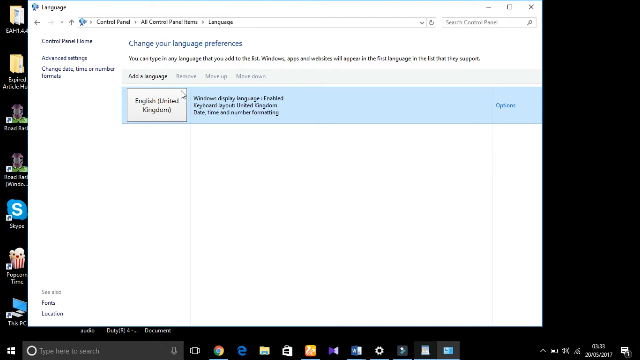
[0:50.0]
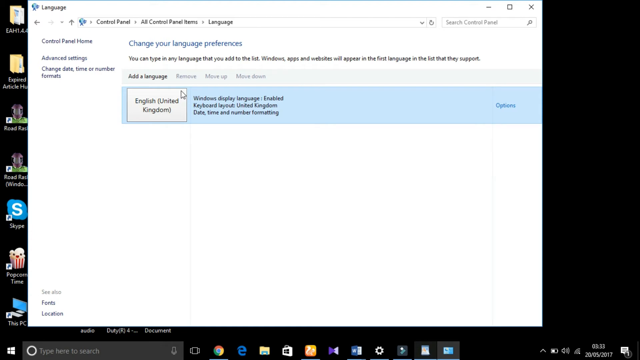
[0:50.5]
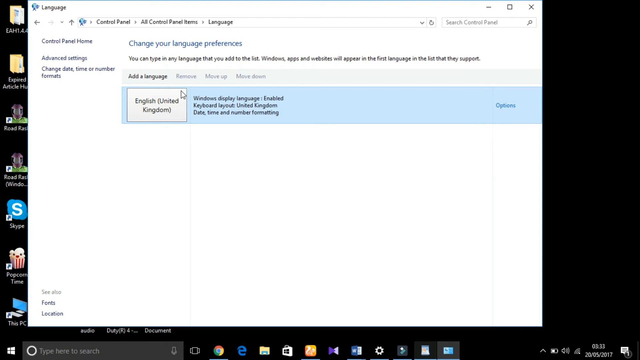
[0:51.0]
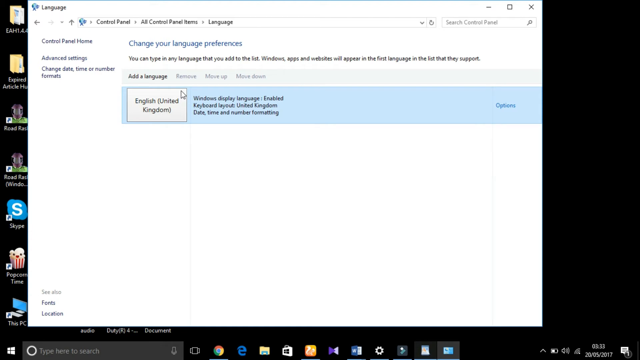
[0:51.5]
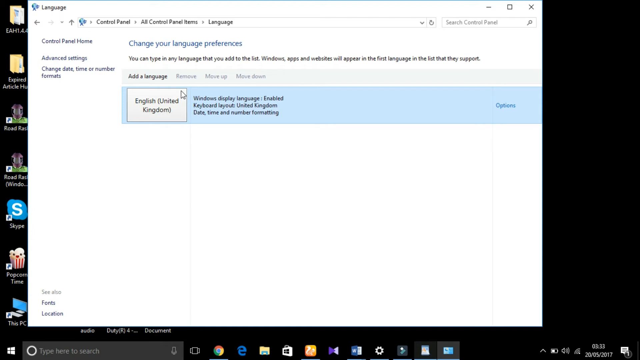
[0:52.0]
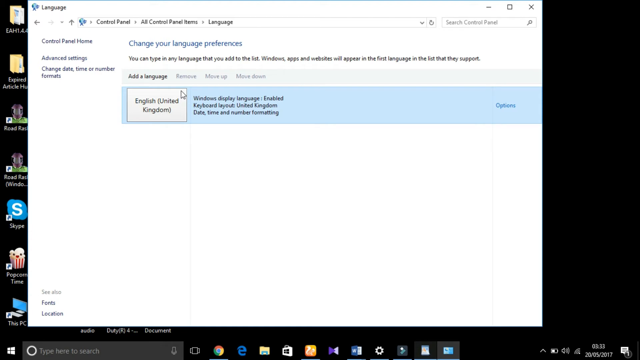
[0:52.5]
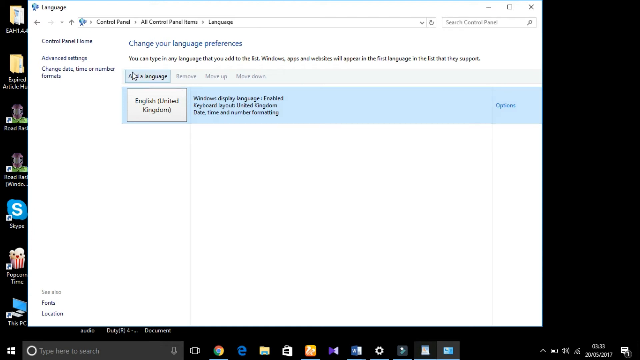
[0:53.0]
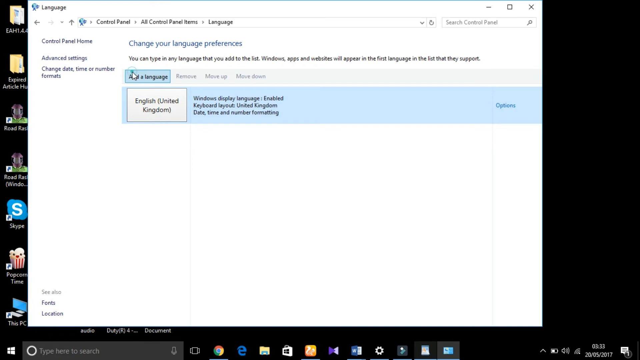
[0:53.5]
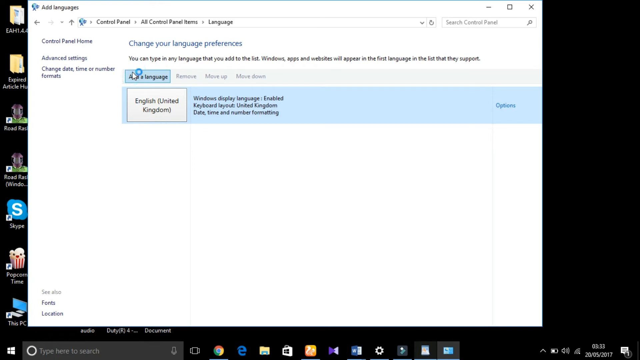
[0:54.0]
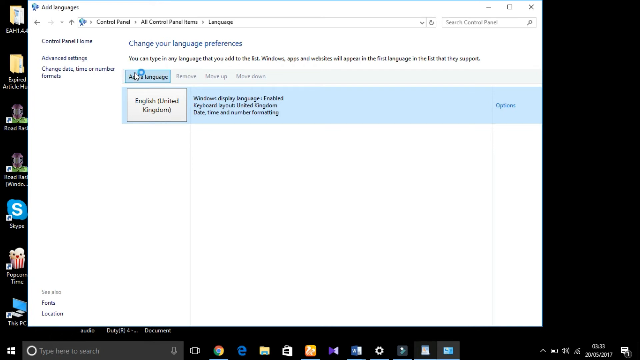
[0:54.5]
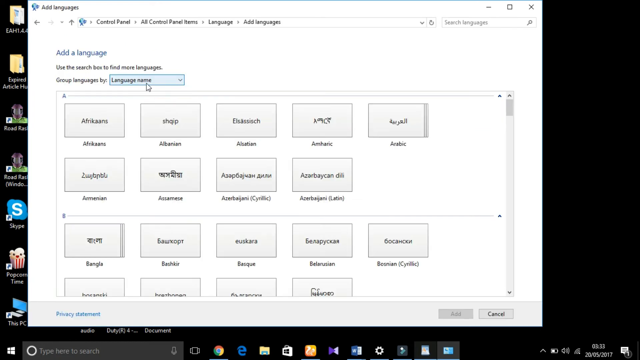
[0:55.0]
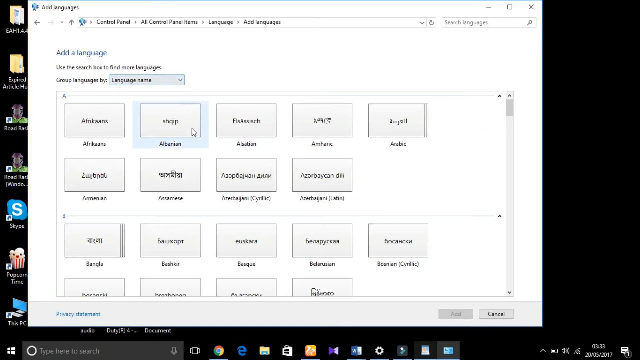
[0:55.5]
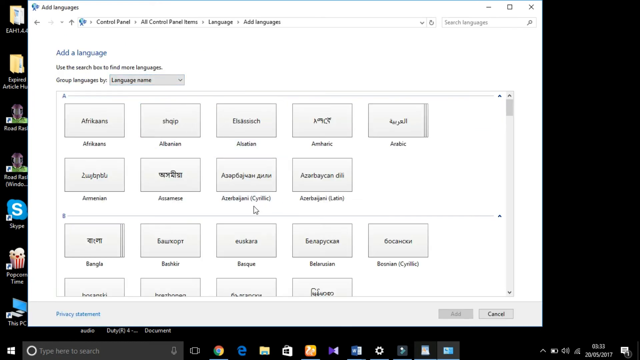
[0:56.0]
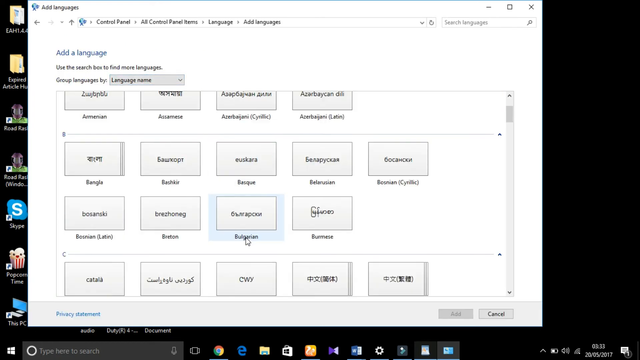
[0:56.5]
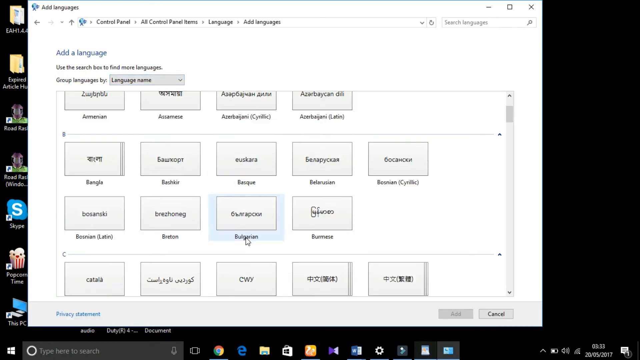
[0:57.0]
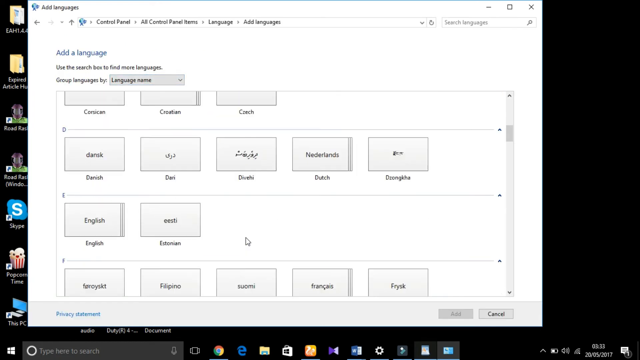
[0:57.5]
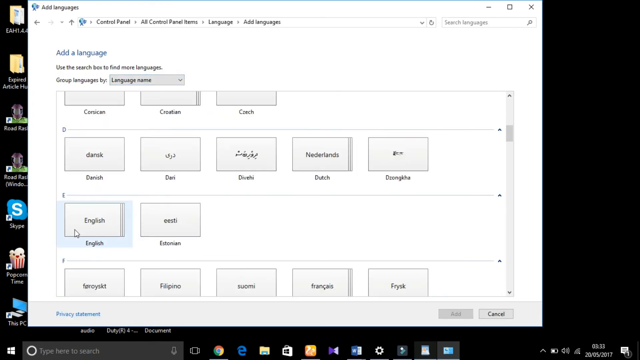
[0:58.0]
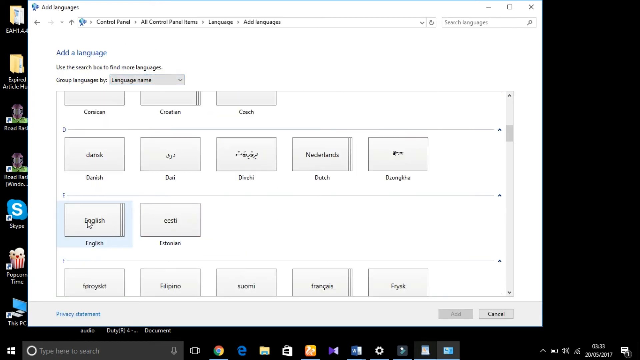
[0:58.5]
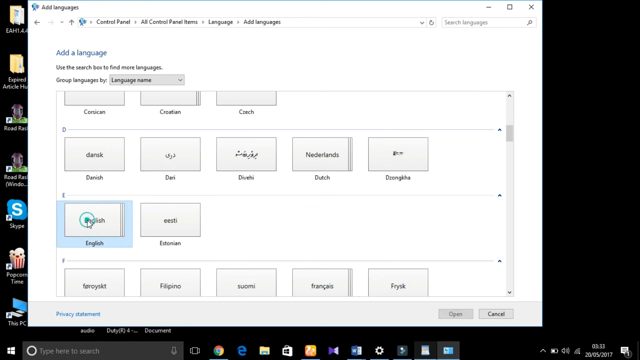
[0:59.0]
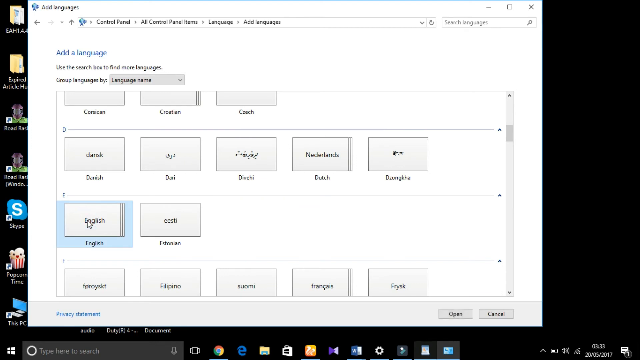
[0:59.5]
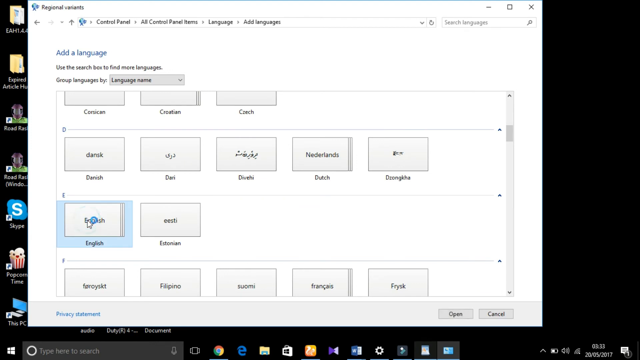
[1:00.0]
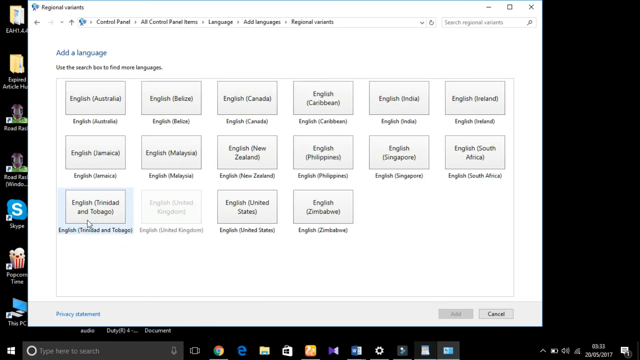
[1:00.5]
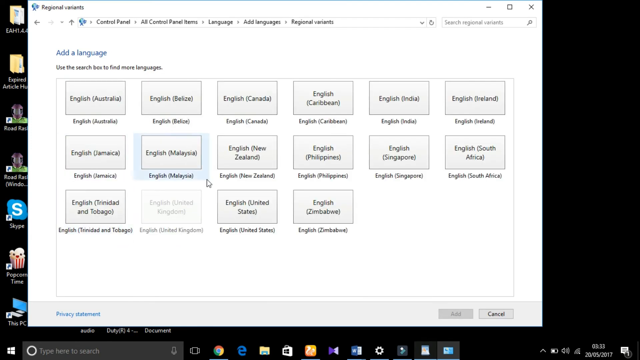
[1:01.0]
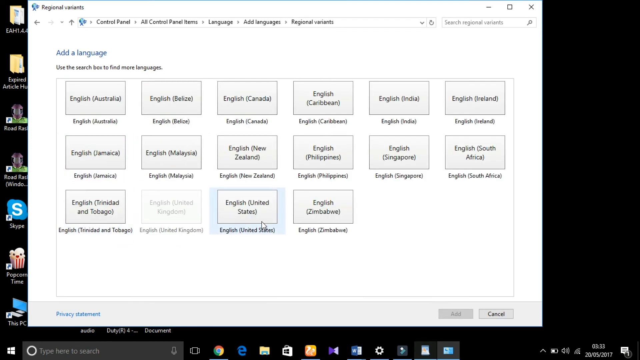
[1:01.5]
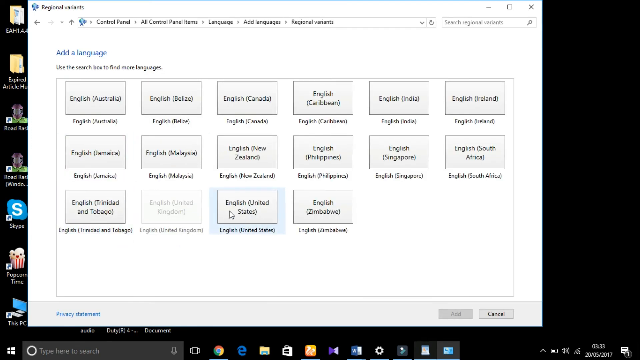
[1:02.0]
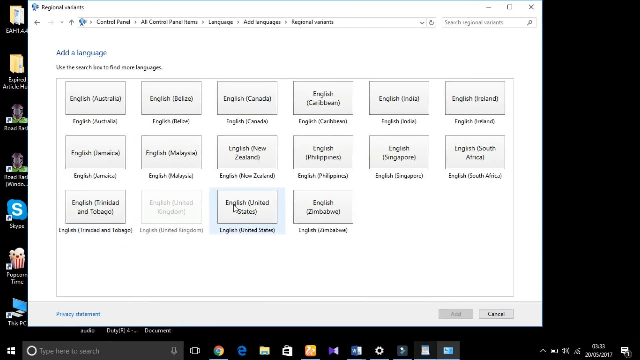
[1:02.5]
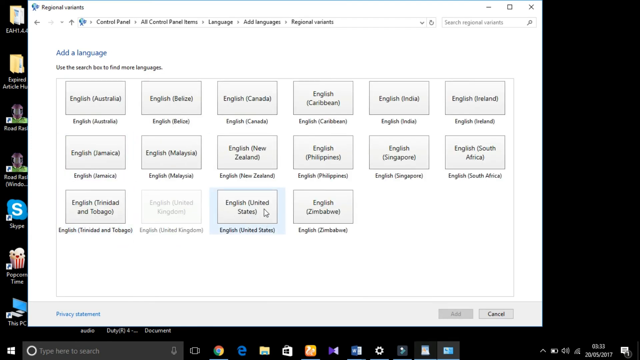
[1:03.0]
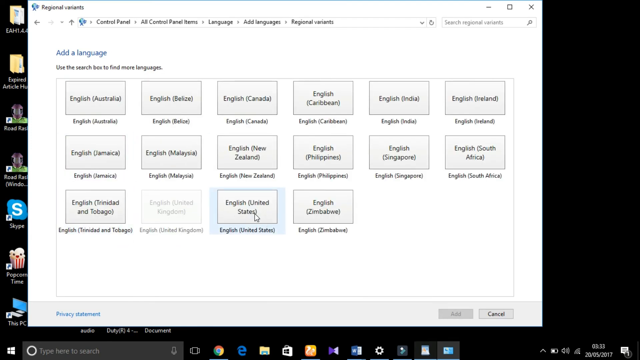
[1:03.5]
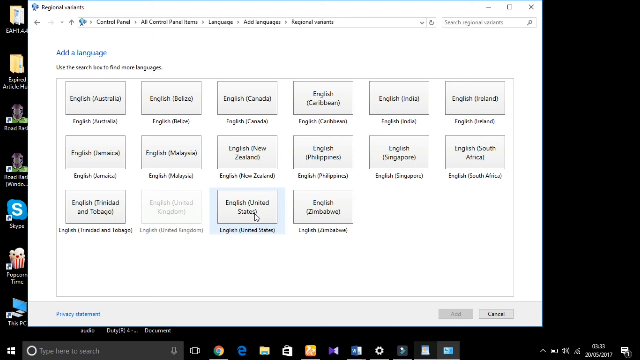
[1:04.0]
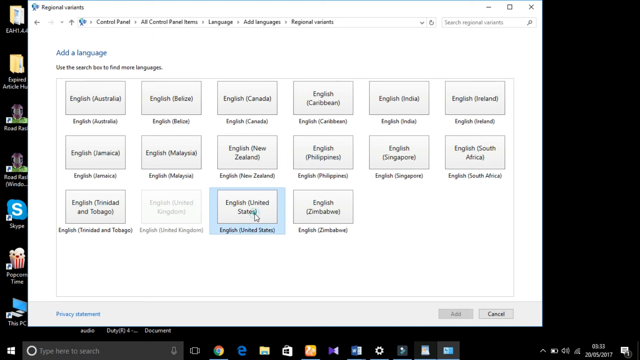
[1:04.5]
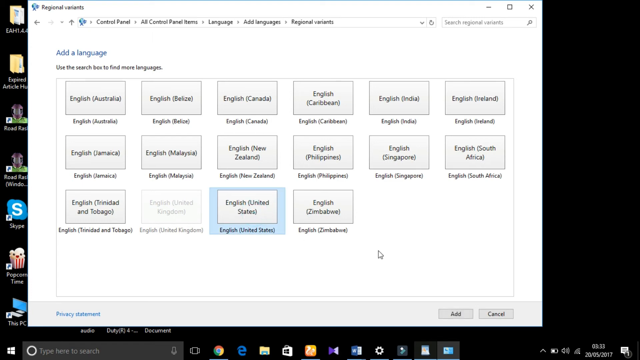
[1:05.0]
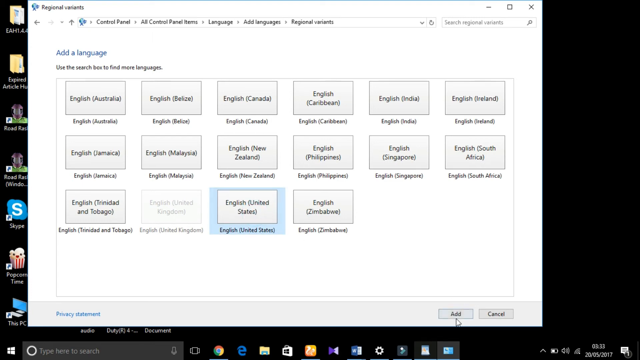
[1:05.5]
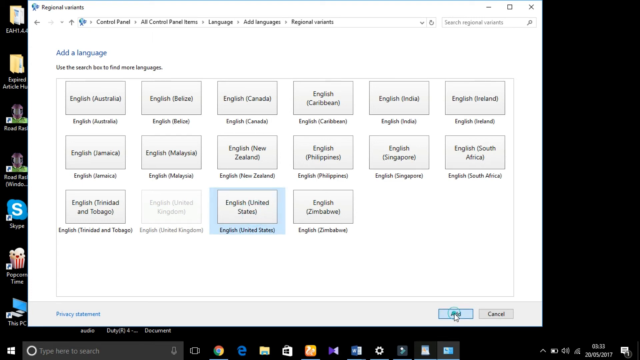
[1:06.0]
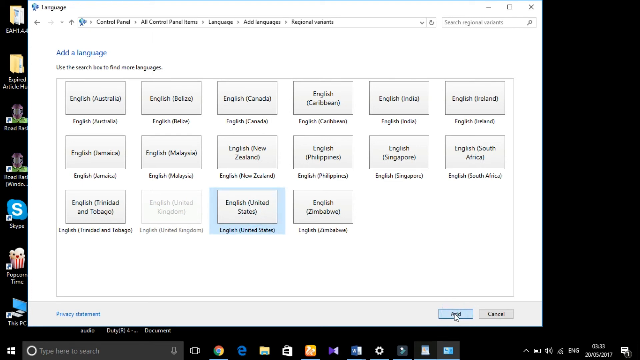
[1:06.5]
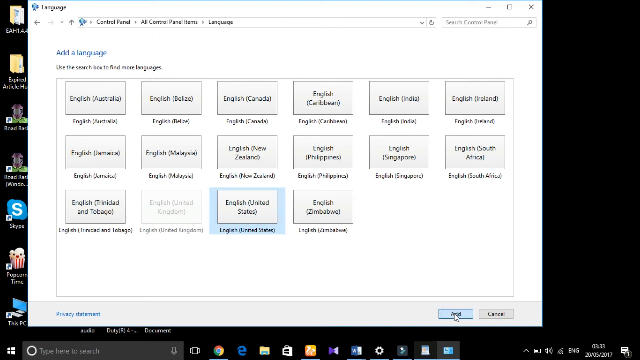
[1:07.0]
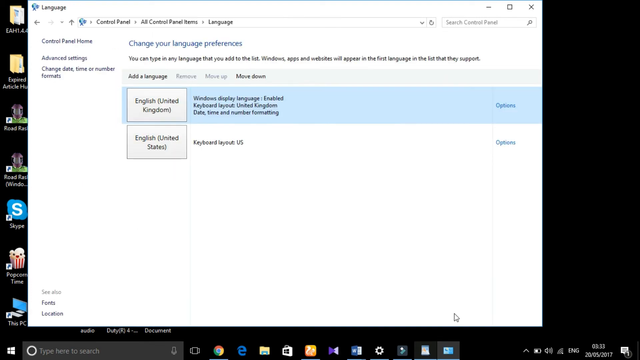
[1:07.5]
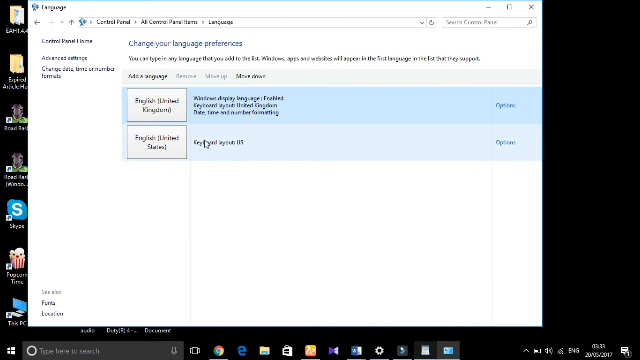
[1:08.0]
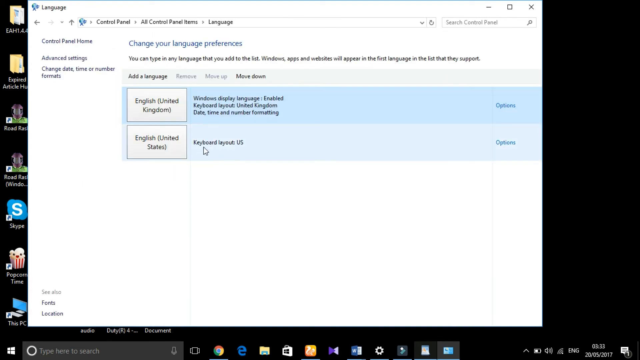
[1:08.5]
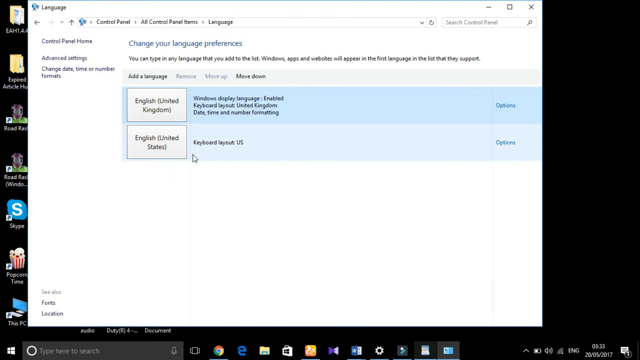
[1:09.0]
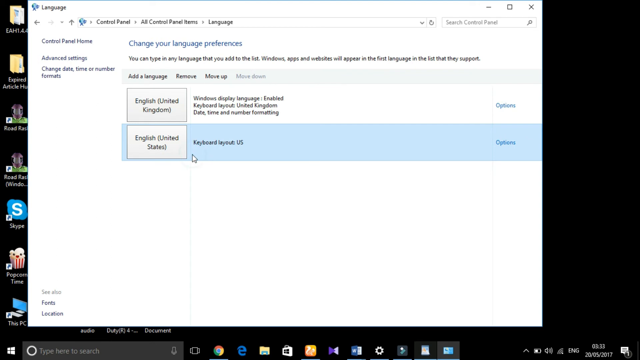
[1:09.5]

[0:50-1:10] The cursor is over the United Kingdom box and clicks an option right above it that says "add a language". A window appears with a bunch of squares showing different languages, each written in English below the box and in the original language inside the box. Scrolling down, Bulgarian is highlighted. Scrolling further, English is clicked, with the word English in the box and below it; the click creates a blue circle that ripples out. Many different options for English appear in three rows of boxes. Scrolling down to the third column, the third box at the bottom says "English United States" and is highlighted in blue. It is clicked, and then add is clicked at the very bottom. The screen returns to "change your language preferences", now listing both English United Kingdom and English United States, and the English United States box is highlighted.